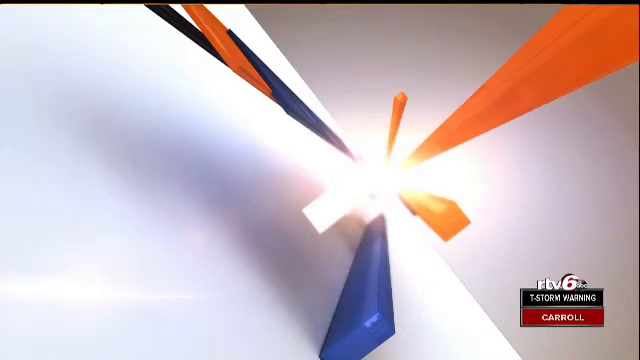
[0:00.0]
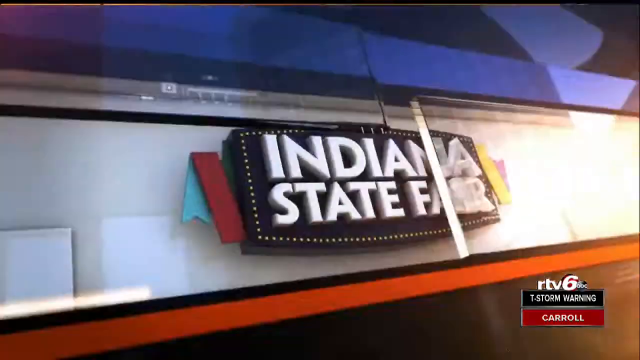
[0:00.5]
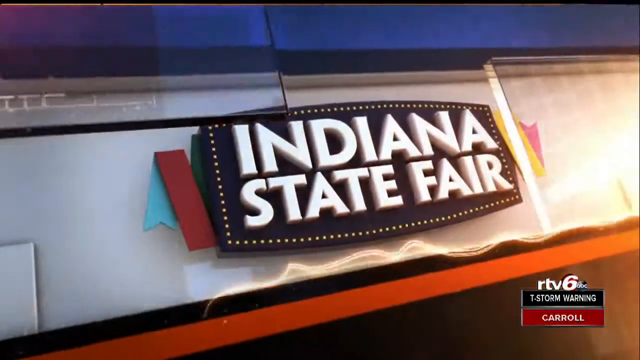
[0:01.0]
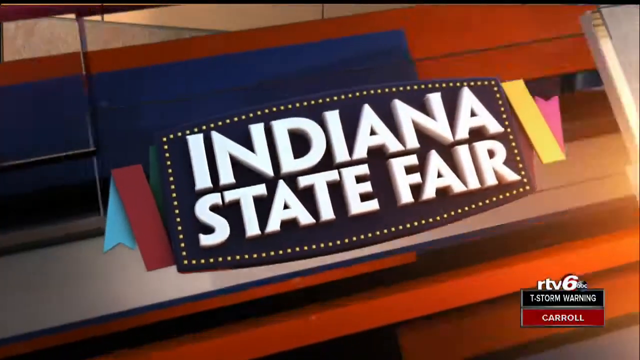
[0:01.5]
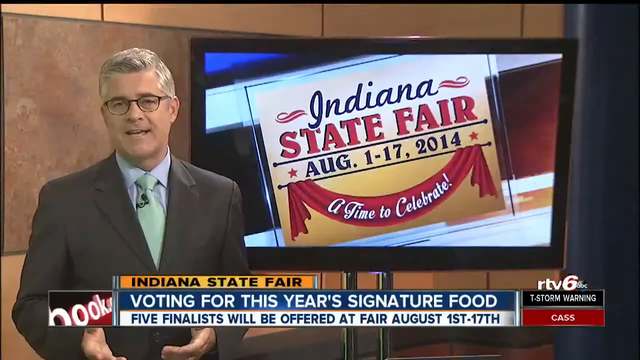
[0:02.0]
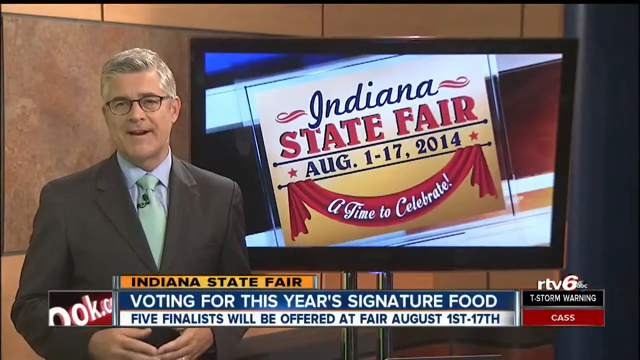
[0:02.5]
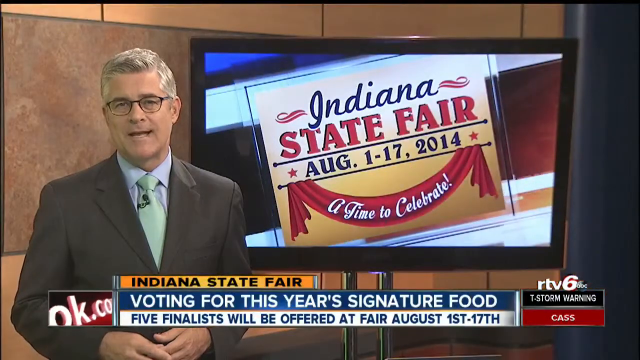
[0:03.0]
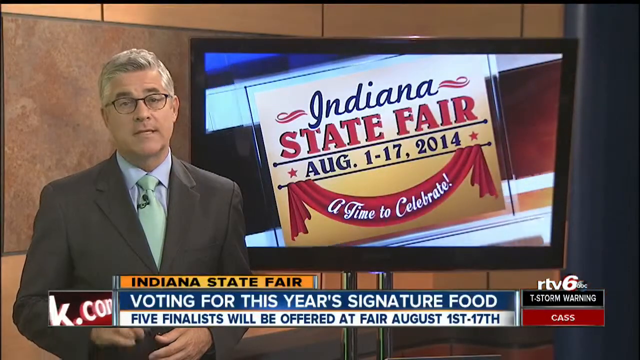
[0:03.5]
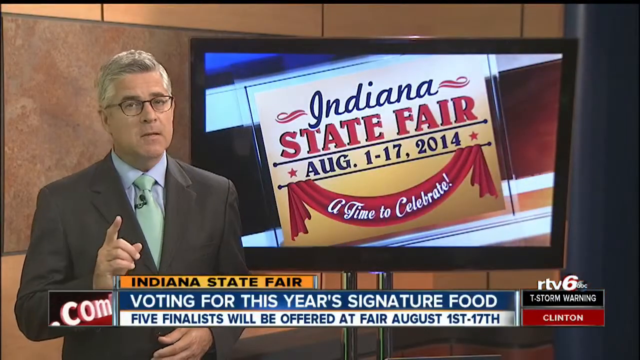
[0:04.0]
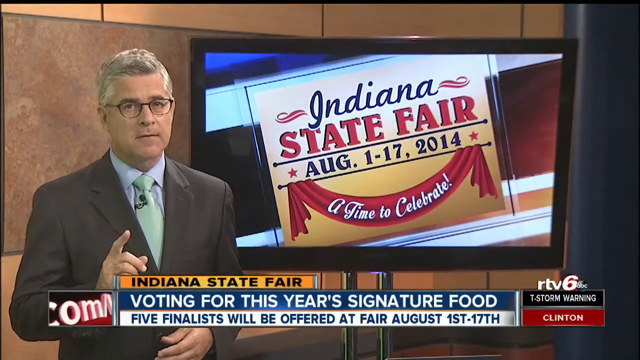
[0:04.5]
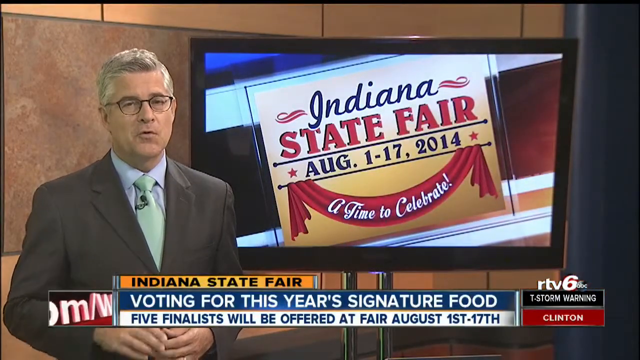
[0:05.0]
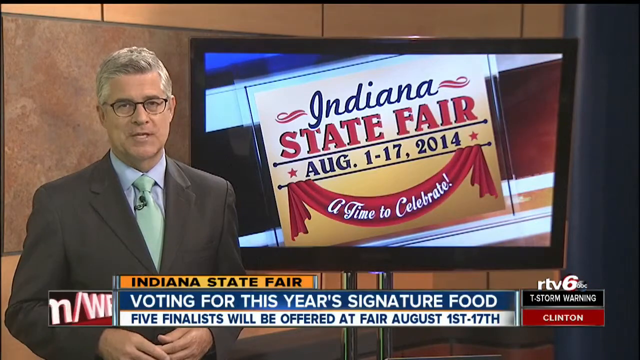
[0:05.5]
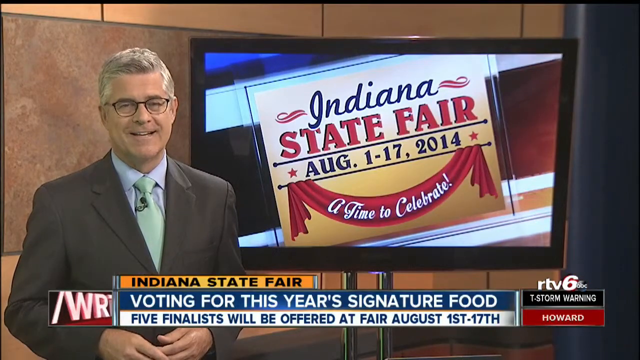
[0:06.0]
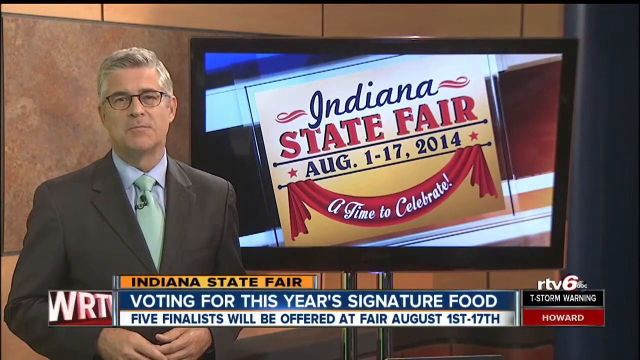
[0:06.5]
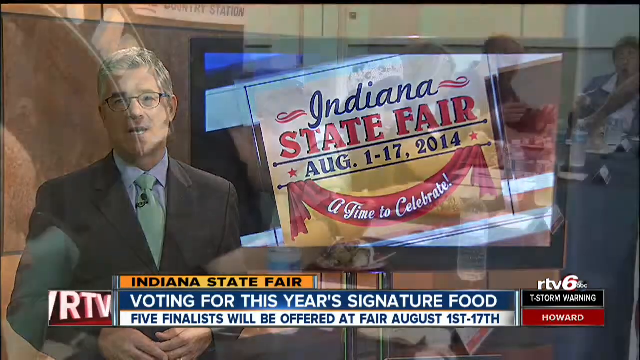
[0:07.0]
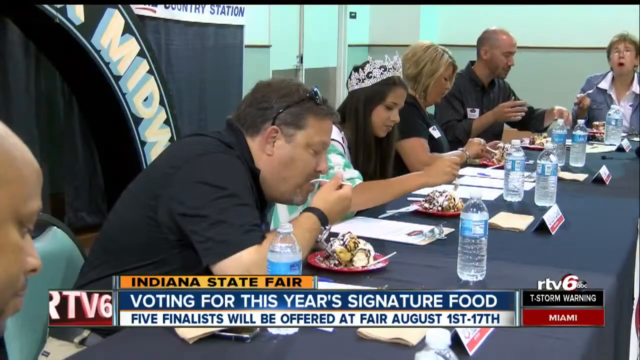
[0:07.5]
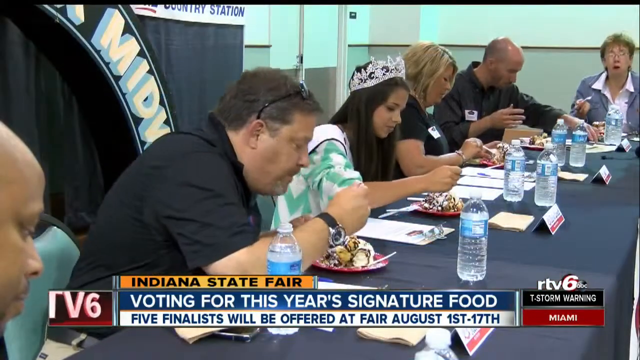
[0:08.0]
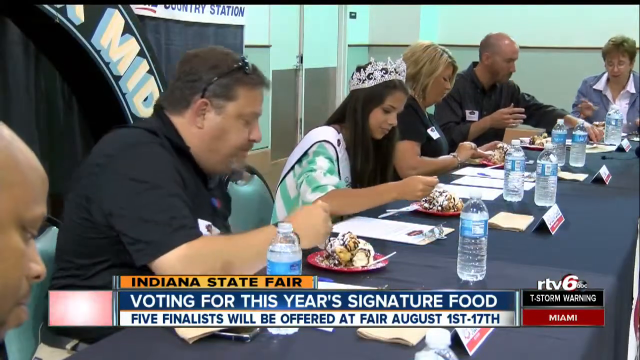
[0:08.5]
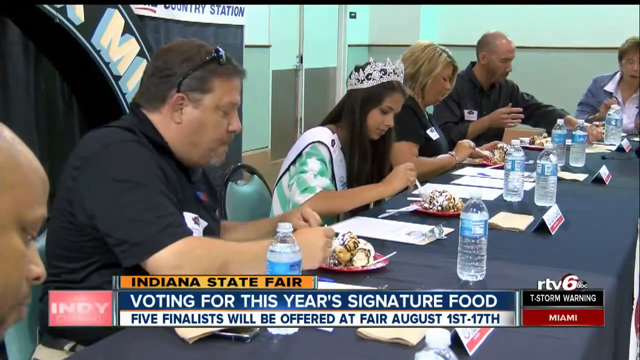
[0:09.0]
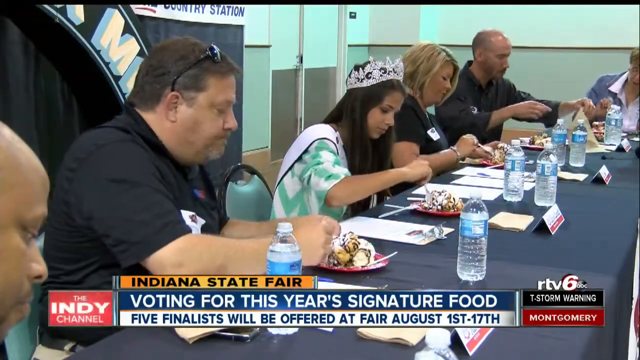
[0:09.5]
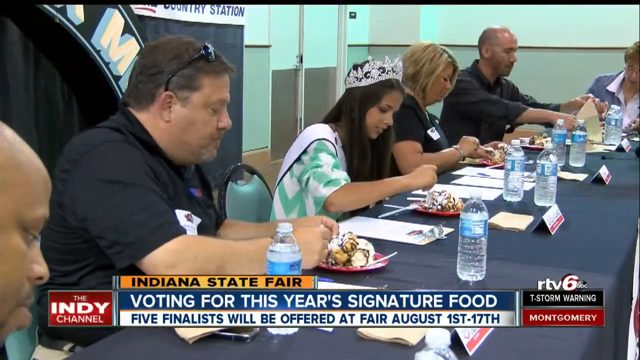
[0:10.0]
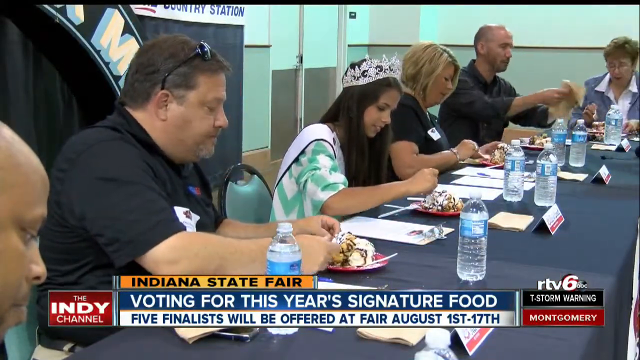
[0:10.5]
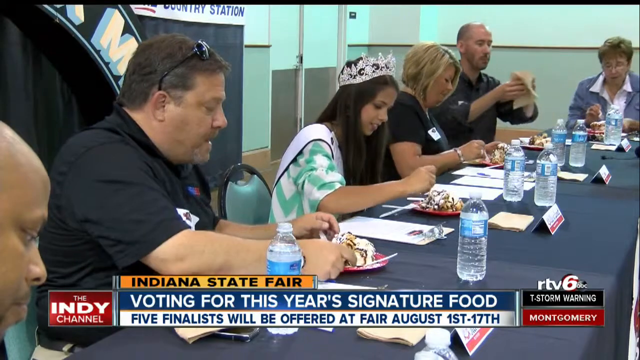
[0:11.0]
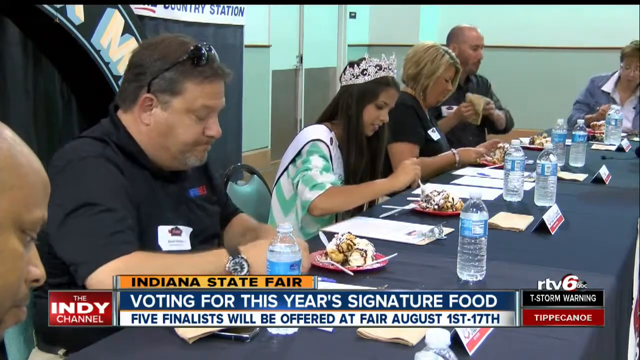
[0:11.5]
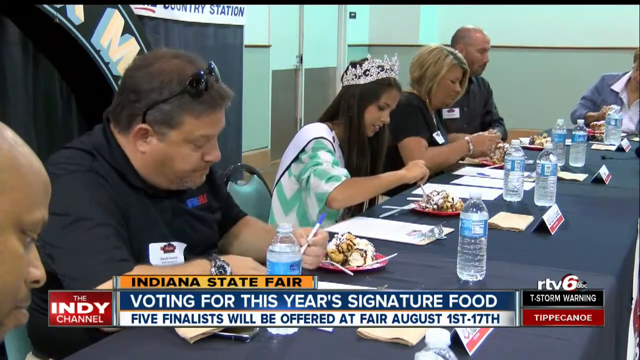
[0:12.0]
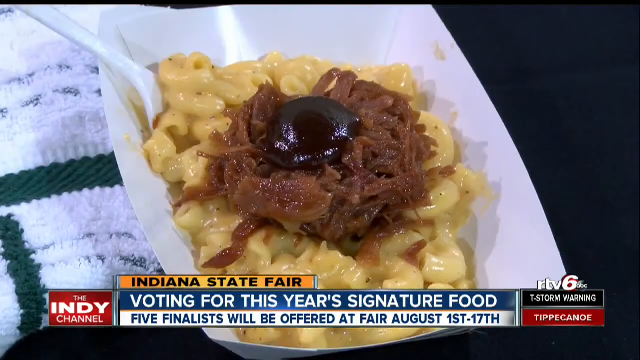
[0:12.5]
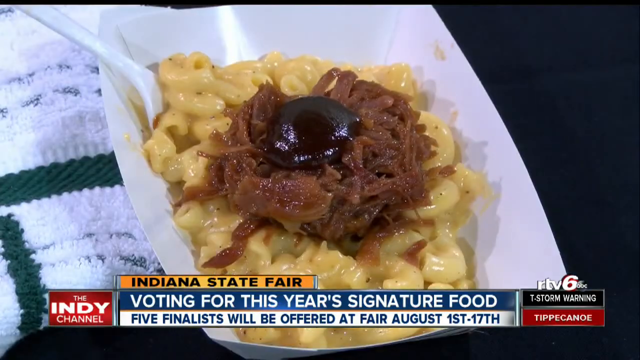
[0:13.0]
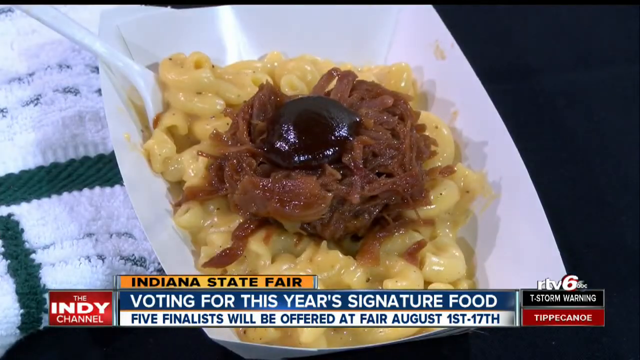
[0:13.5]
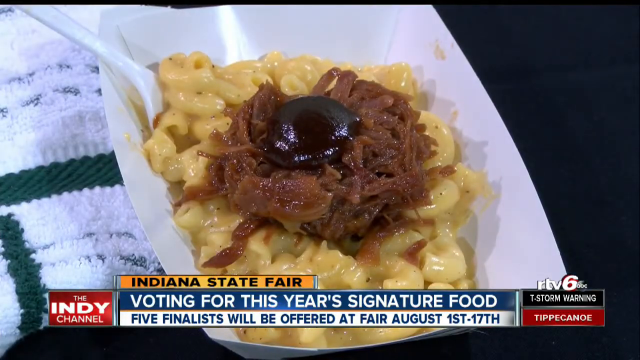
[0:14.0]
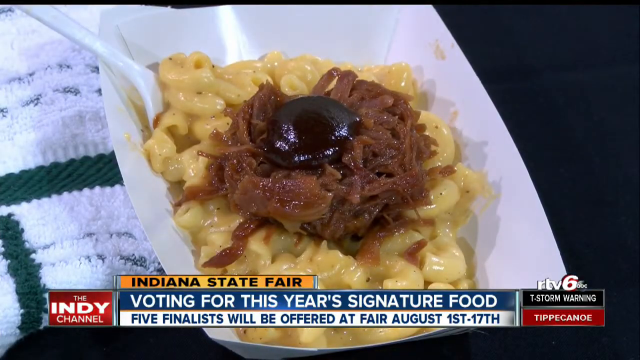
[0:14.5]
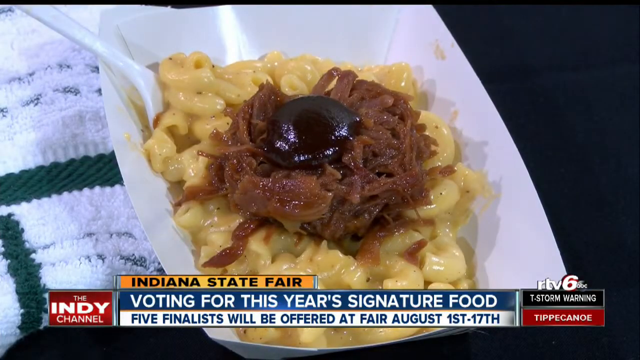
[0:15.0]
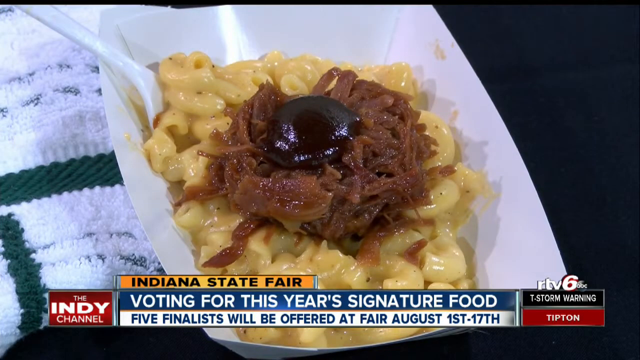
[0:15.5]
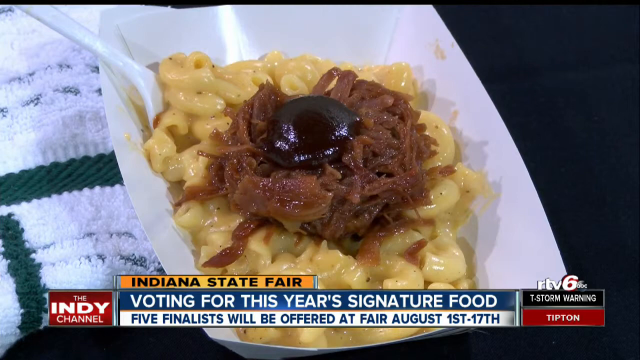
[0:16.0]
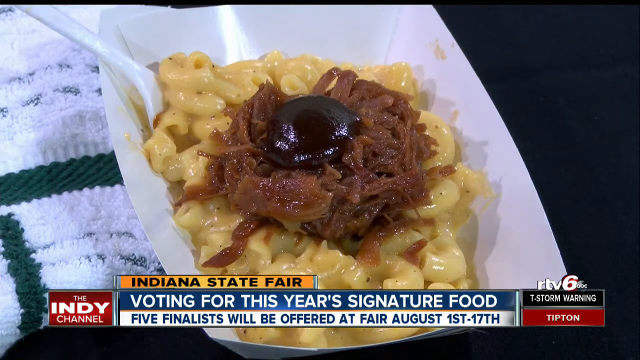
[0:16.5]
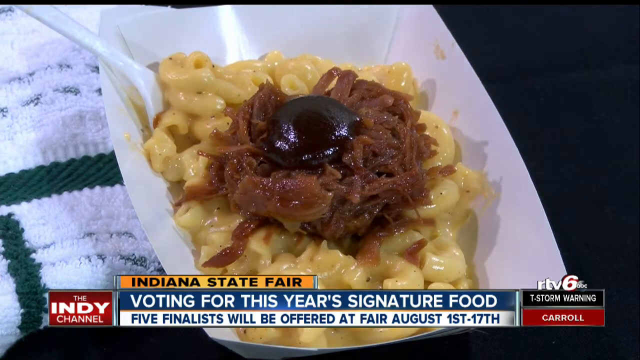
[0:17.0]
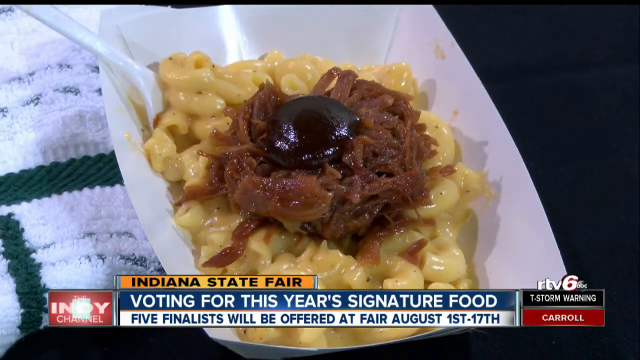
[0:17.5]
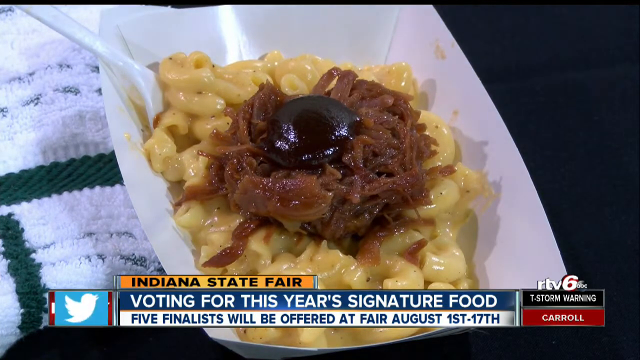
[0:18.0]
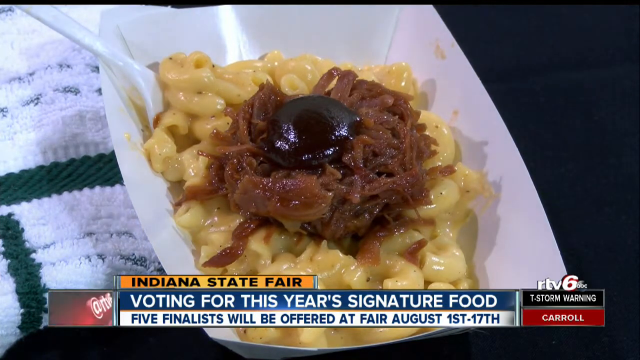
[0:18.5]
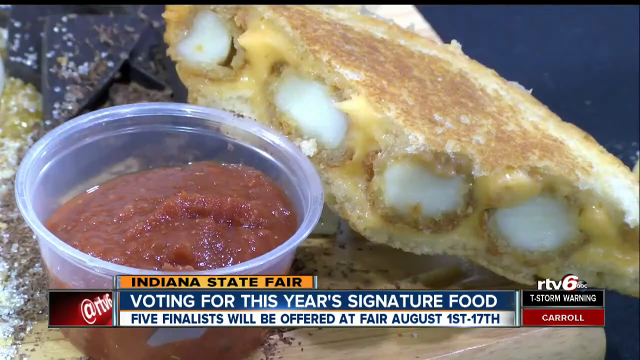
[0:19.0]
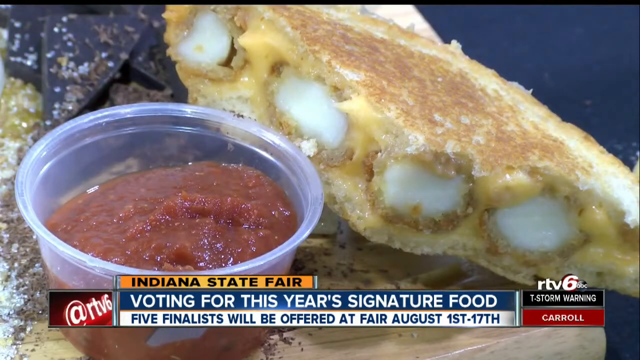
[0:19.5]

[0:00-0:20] Light plays across a TV screen, and then "Indiana State Fair" appears on a black sign. A gentleman on screen is a reporter in a brown suit and a green tie, wearing glasses. Behind him is a monitor reading "Indiana State Fair August 1st to the 17th 2014," with "a time to celebrate" on a banner at the bottom. The screen also reads "voting for this year's signature food five finalists will be offered at fair August 1st to the 17th." On the lower right-hand side is the text "first storm morning." The broadcast is from a TV 6 ABC affiliate, and text scrolling on the left side says "the indie channel." Food from the fair is shown, apparently in a cardboard carton, served with some sauce in a little plastic cup.